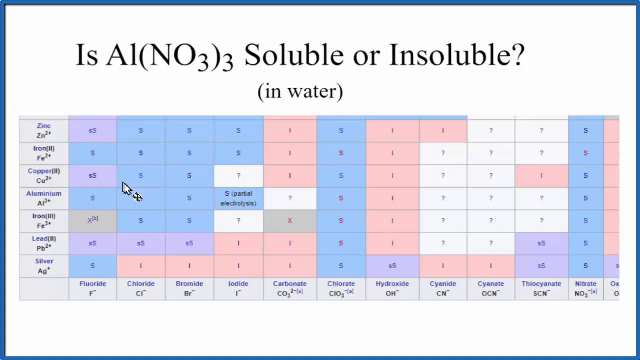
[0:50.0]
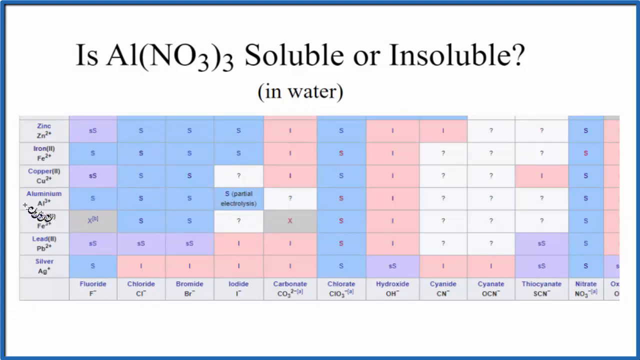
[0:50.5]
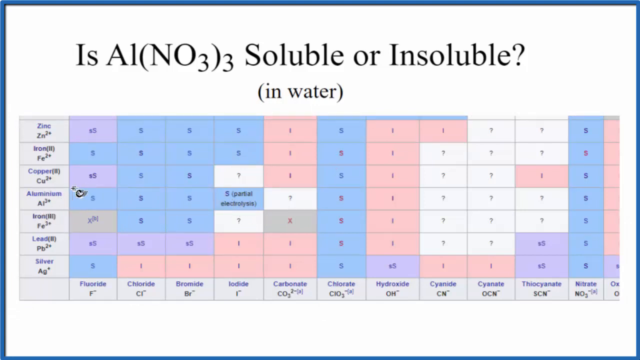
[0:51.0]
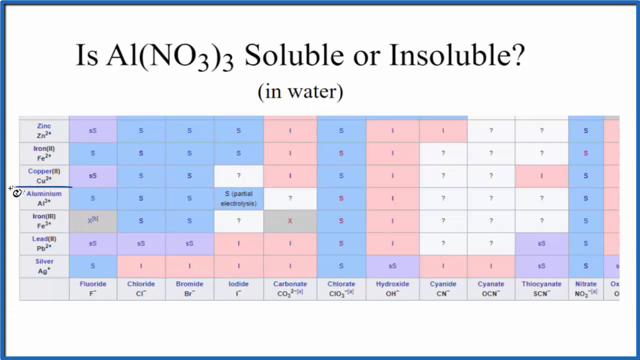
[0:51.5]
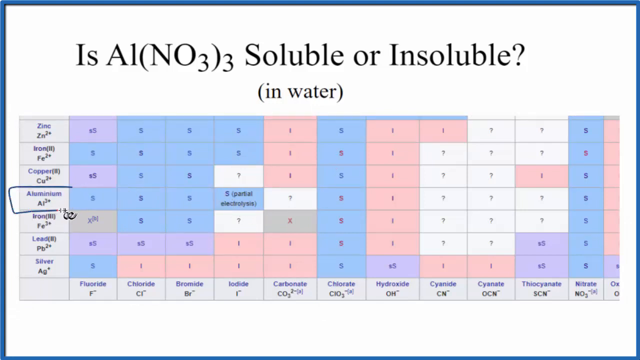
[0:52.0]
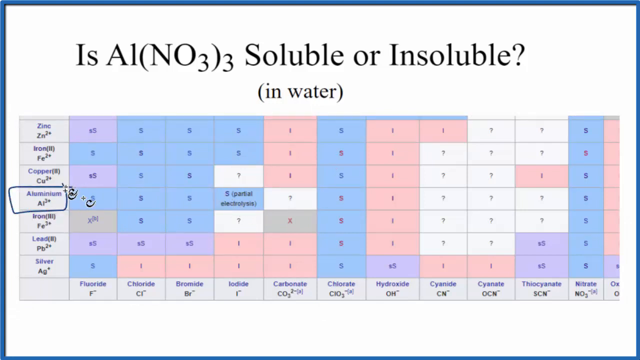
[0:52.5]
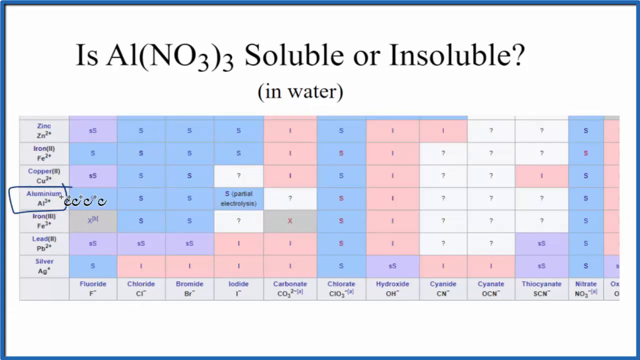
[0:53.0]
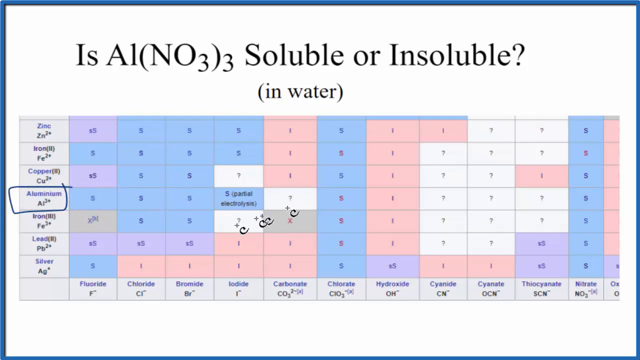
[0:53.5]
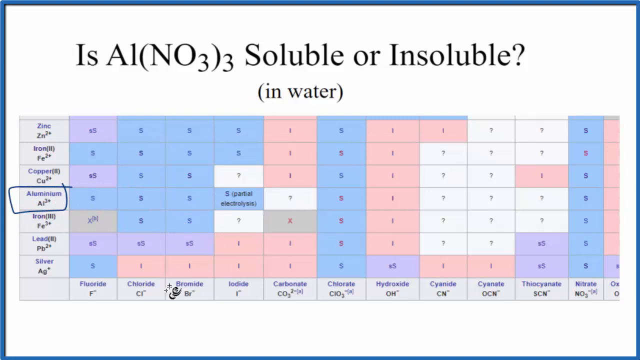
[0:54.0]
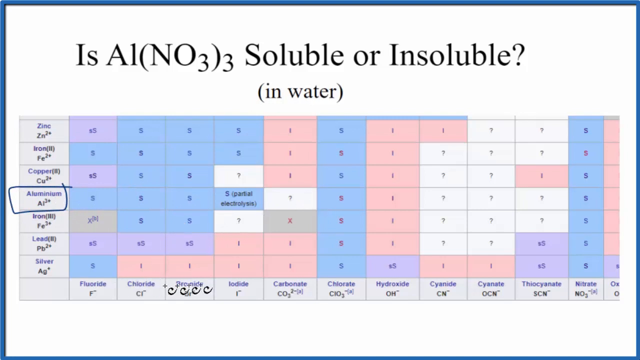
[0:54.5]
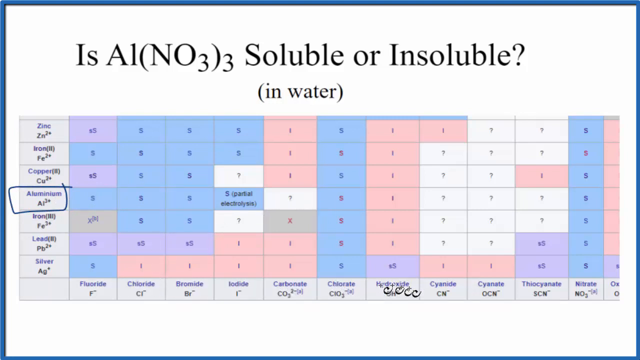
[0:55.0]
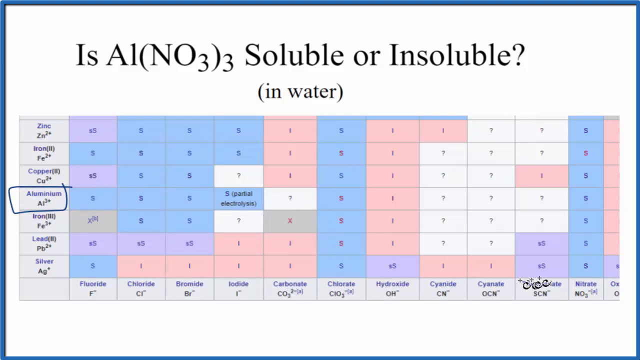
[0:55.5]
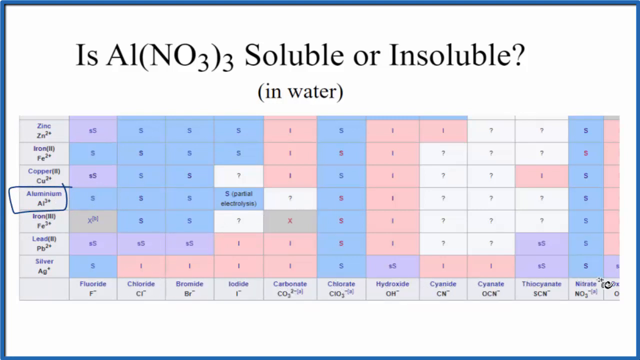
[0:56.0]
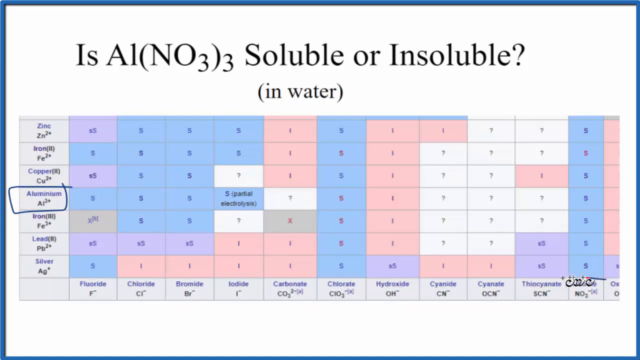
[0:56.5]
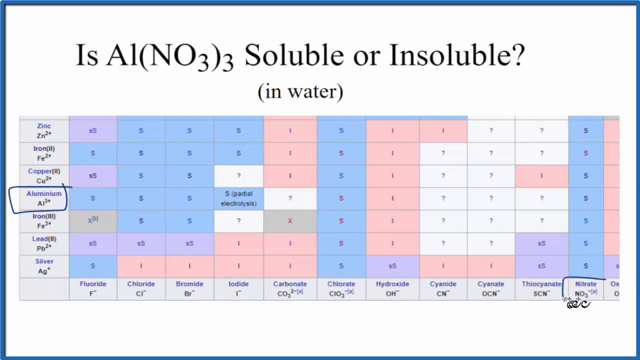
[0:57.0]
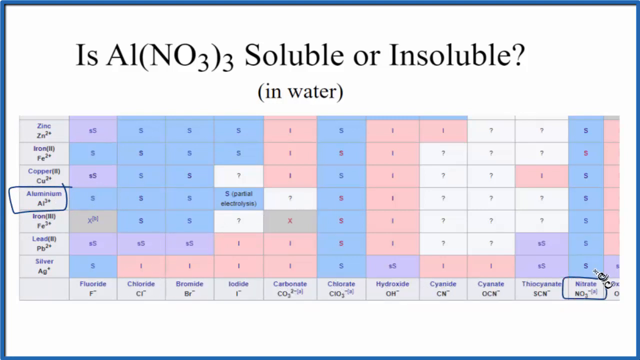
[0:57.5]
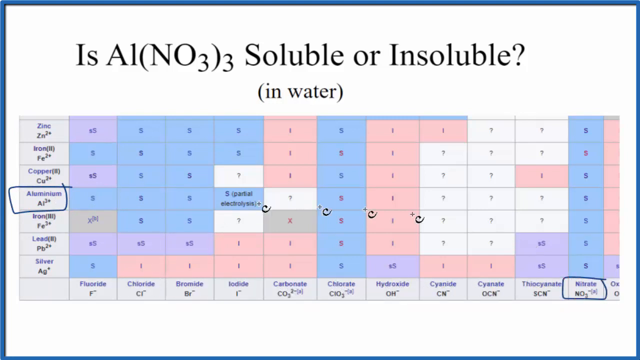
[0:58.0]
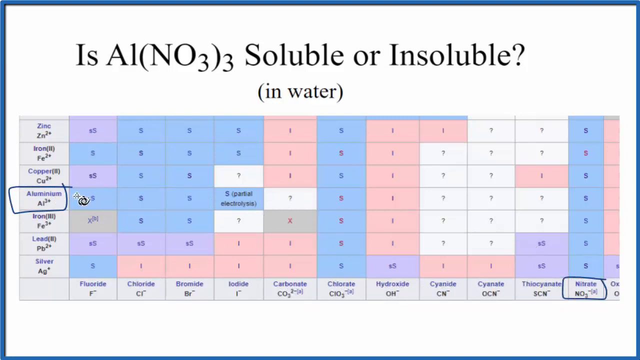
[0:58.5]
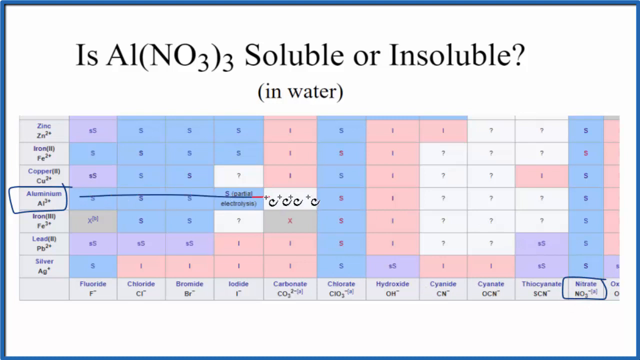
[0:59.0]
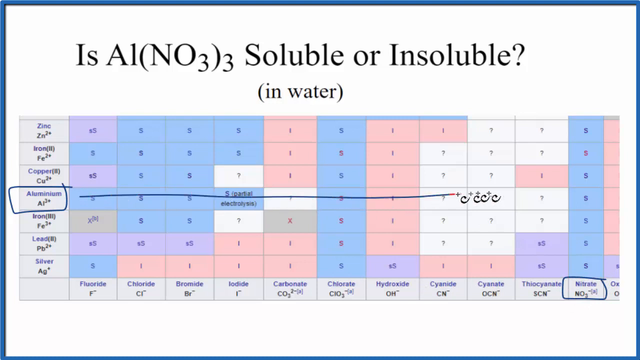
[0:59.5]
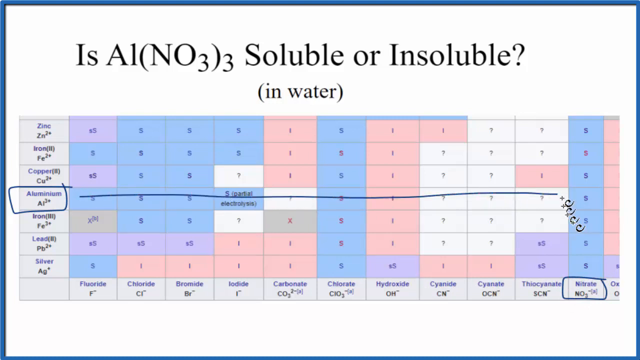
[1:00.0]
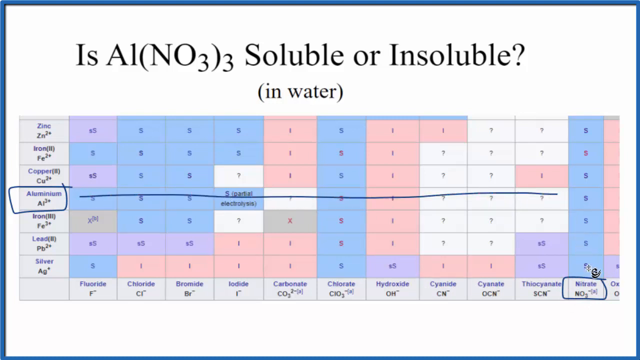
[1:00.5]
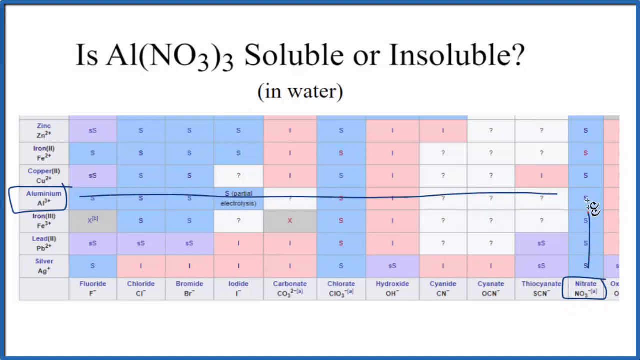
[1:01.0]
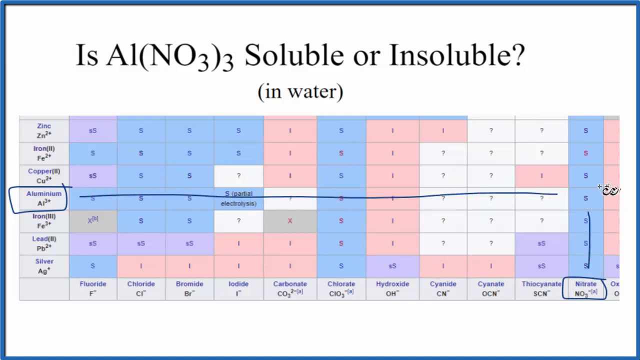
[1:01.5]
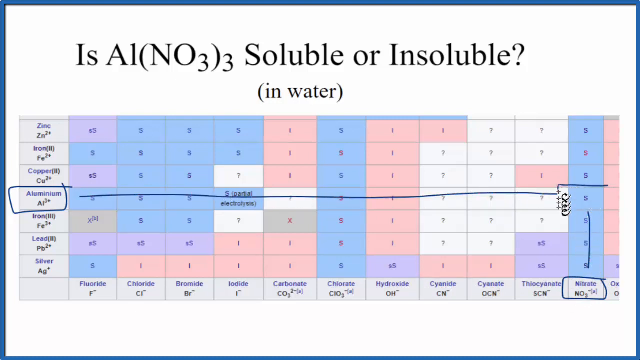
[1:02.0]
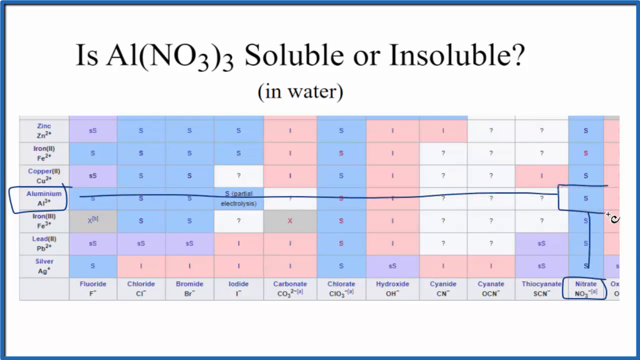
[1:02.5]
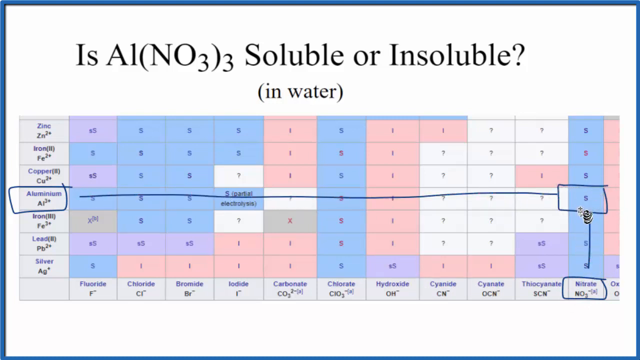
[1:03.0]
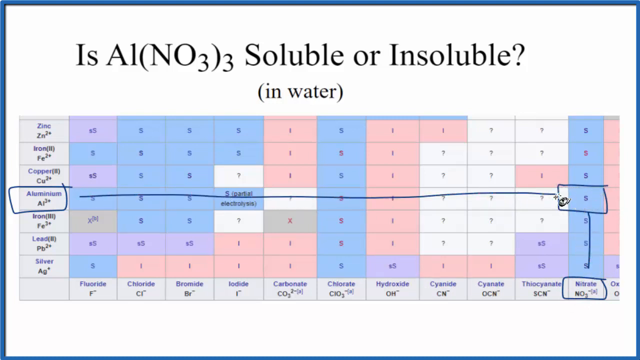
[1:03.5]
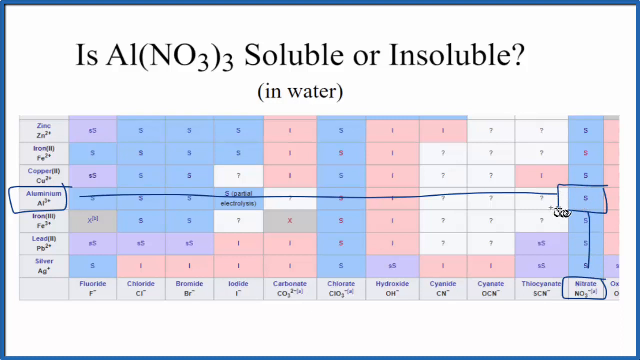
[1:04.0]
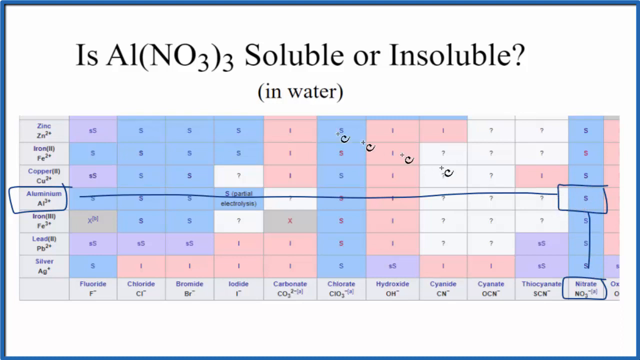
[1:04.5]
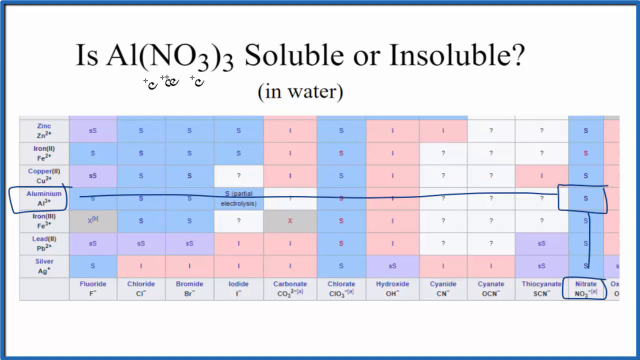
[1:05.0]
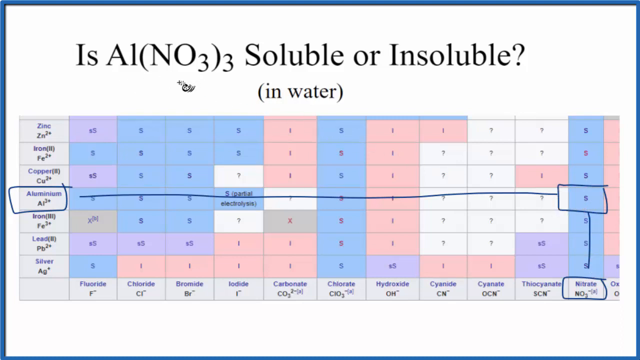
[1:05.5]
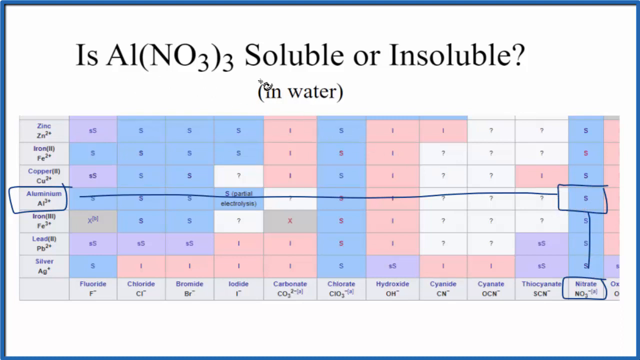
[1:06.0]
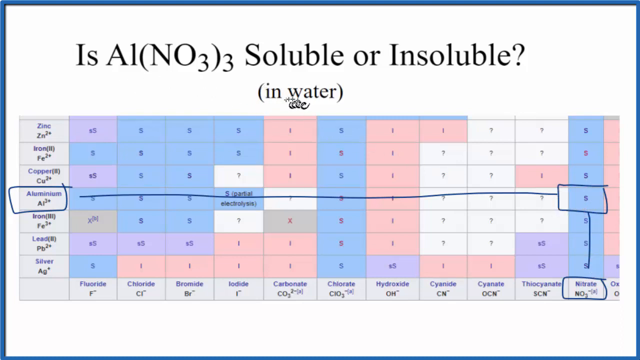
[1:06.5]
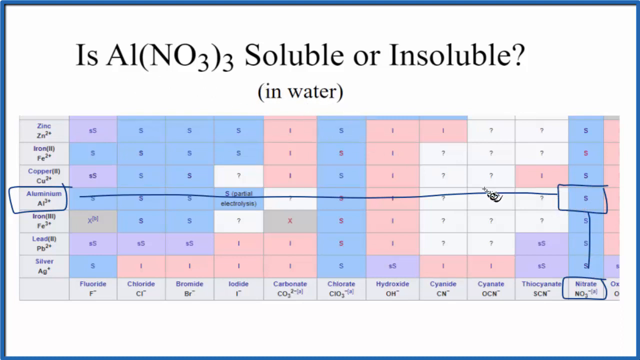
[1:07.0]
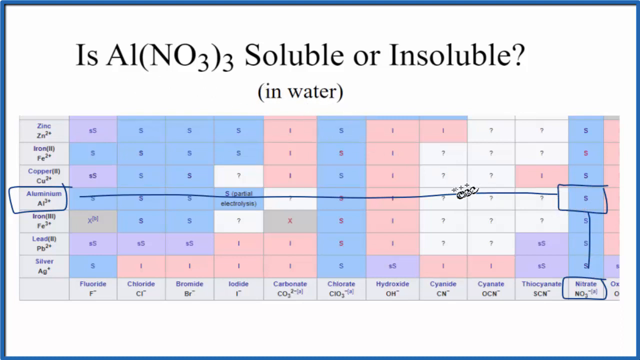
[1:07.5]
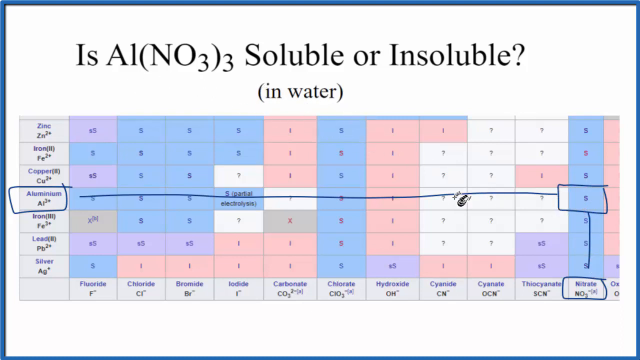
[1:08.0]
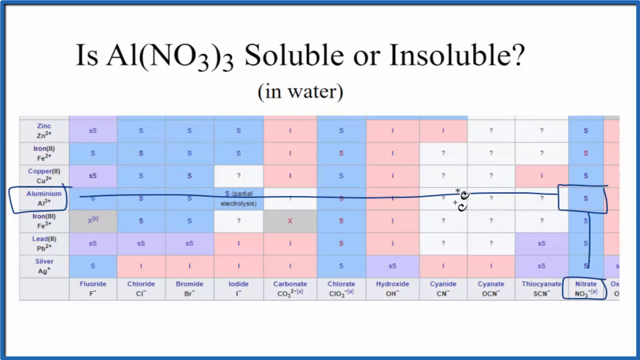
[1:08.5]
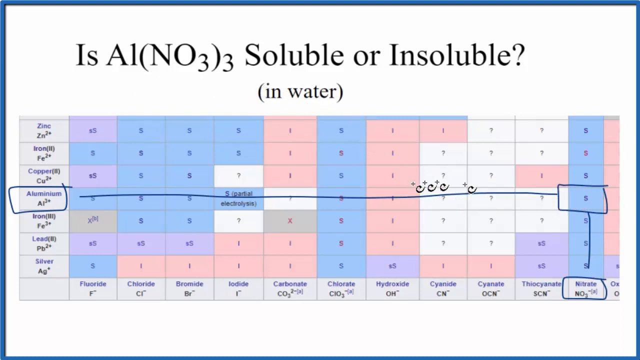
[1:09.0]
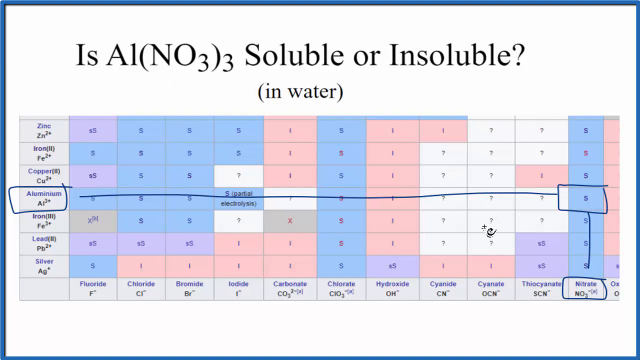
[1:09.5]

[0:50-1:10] The cursor reappears and starts zooming around the table. It hovers over aluminium and draws a square around that box on the table. It then zooms across the table and down to the bottom, hovers over nitrate and draws a square around it. The cursor draws lines across the rows and columns next to aluminium and nitrate to show where they join up, and draws a square around the point where they meet; this square appears to contain the letter S. The cursor then goes back up to the top of the page, hovers under NO3 and then under "in water", returns to the table and hovers over a couple of the squares. The table's details are blurry, and the cursor moves very quickly and sometimes seems to hover in quite random places.